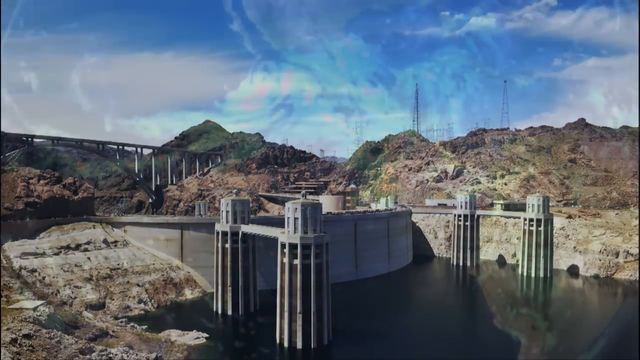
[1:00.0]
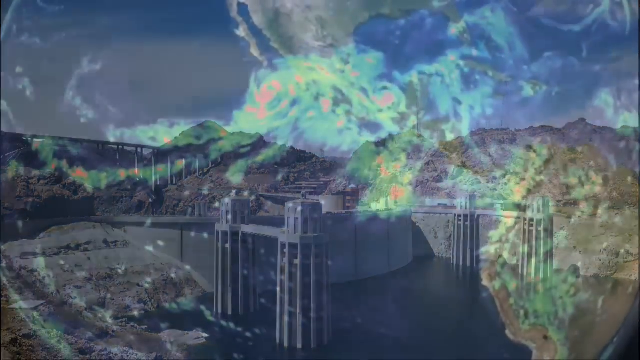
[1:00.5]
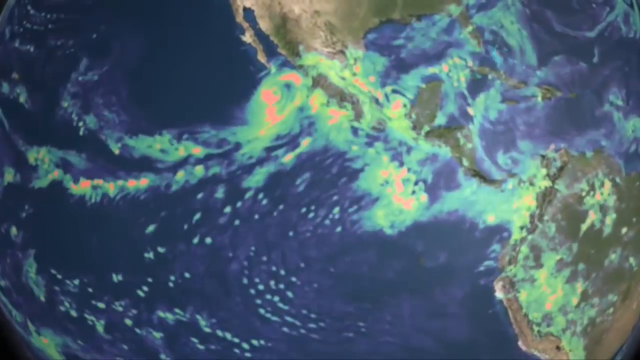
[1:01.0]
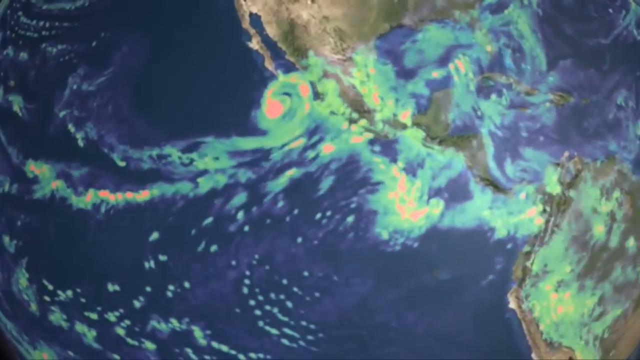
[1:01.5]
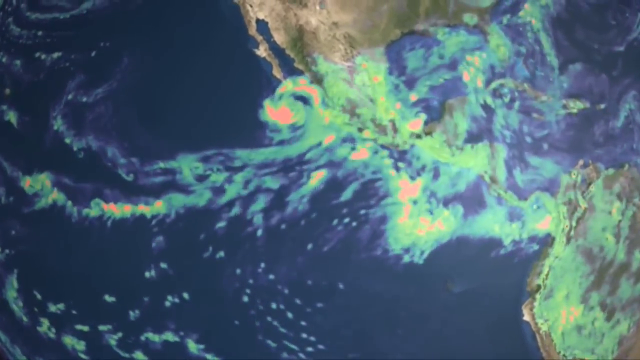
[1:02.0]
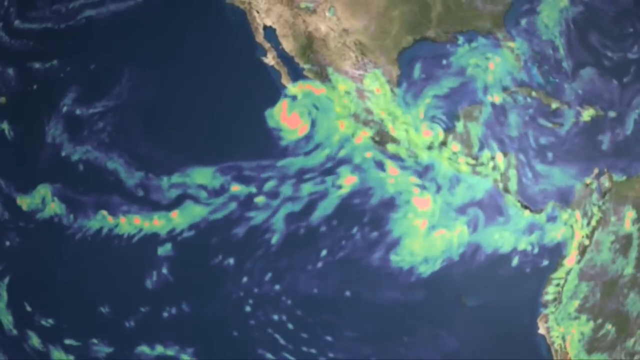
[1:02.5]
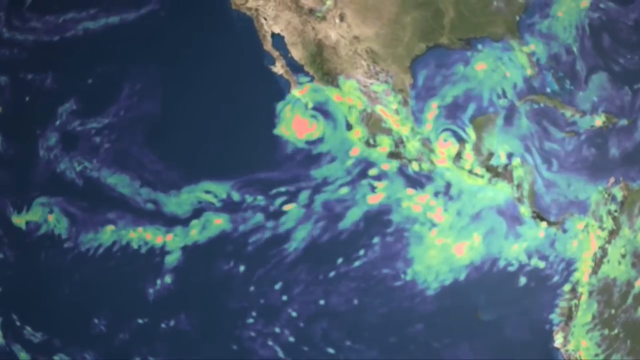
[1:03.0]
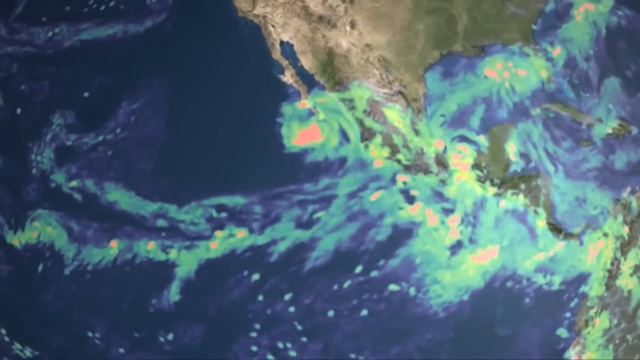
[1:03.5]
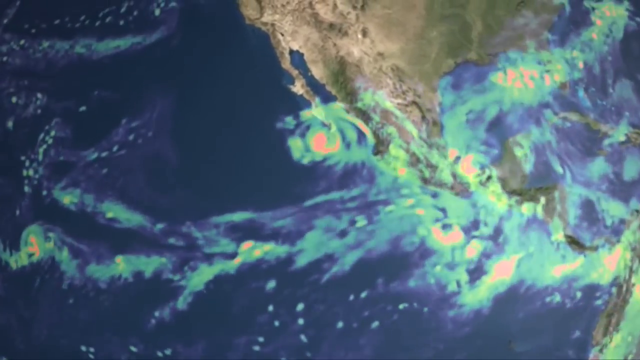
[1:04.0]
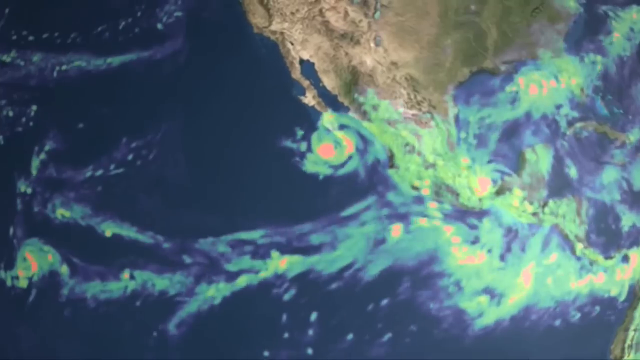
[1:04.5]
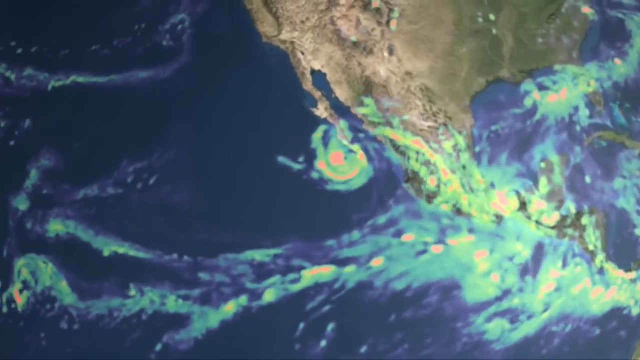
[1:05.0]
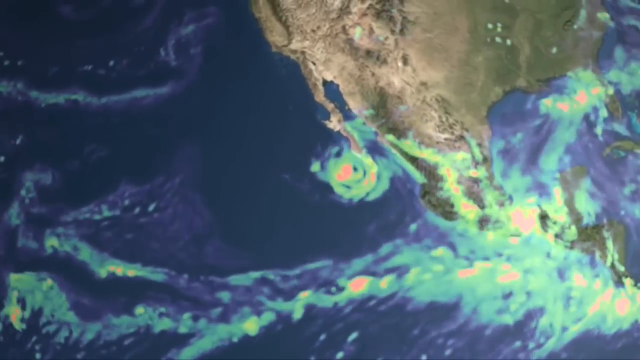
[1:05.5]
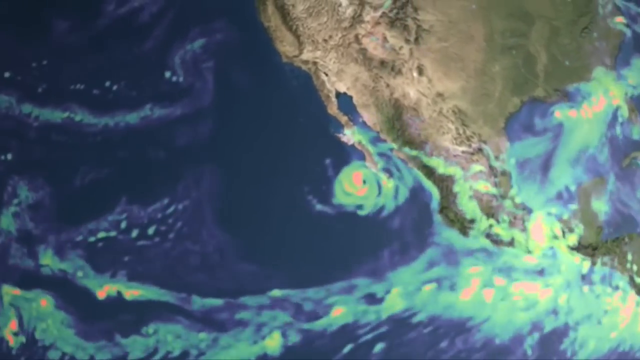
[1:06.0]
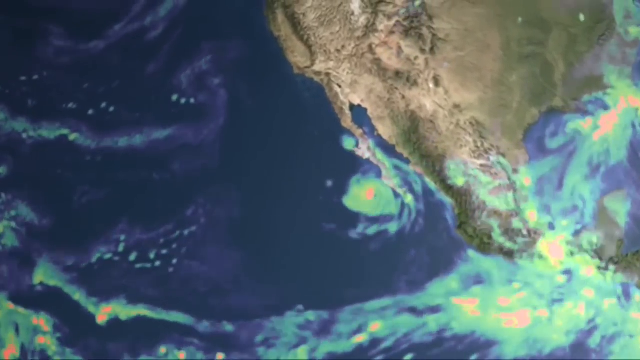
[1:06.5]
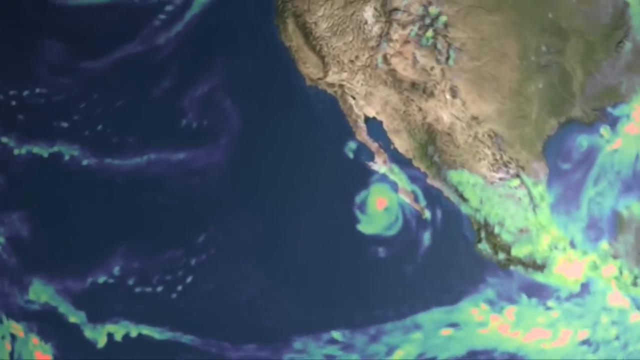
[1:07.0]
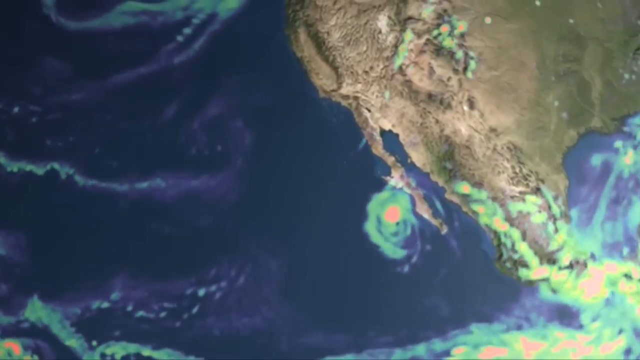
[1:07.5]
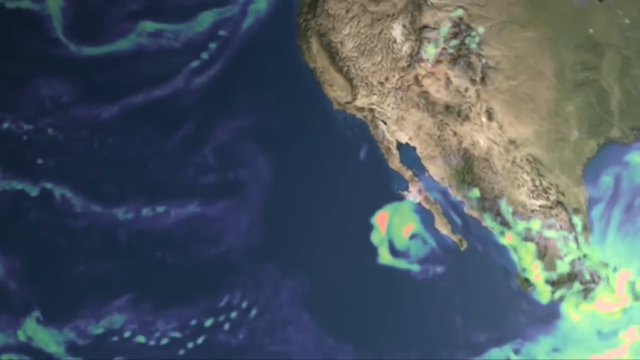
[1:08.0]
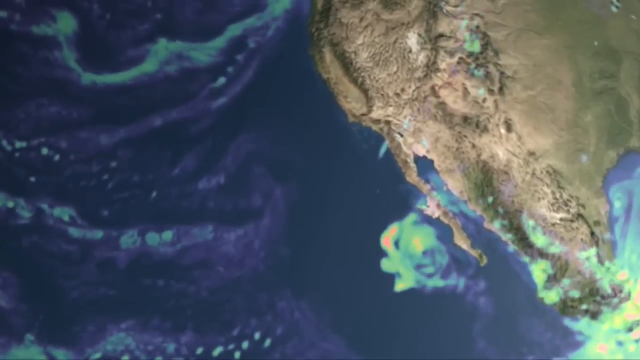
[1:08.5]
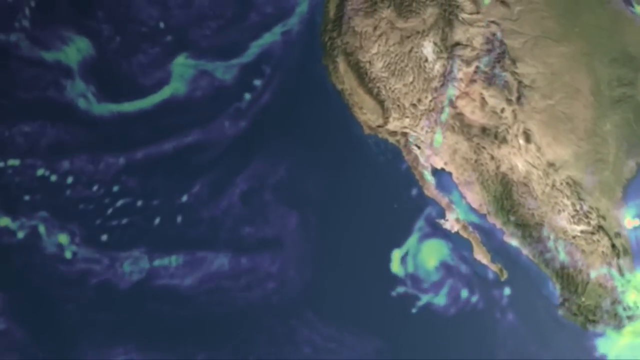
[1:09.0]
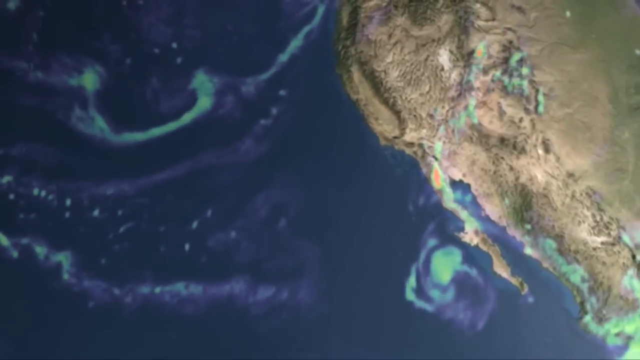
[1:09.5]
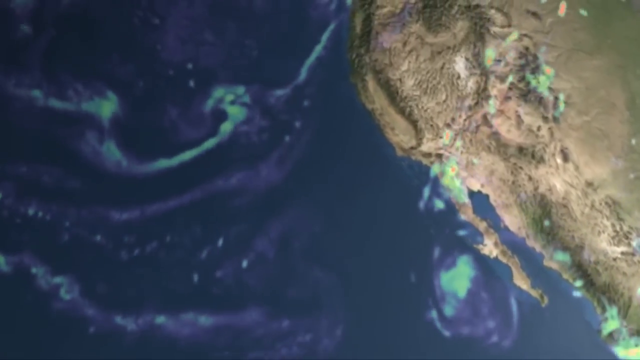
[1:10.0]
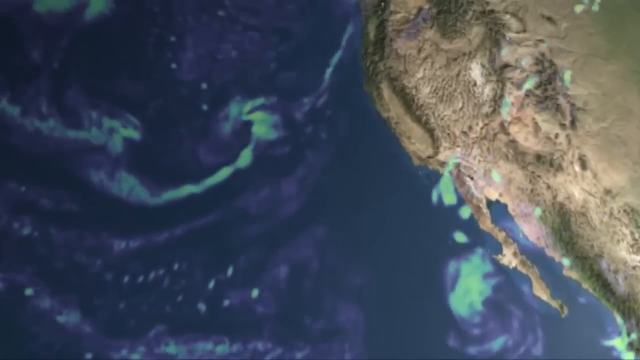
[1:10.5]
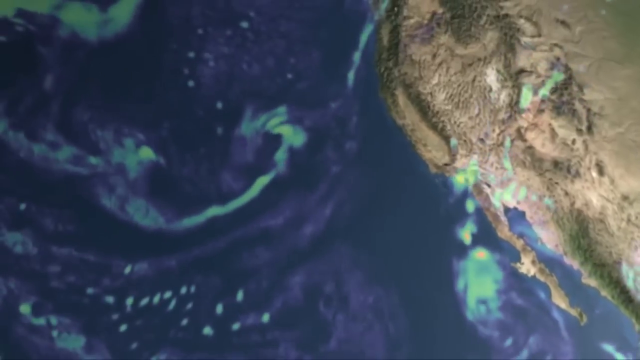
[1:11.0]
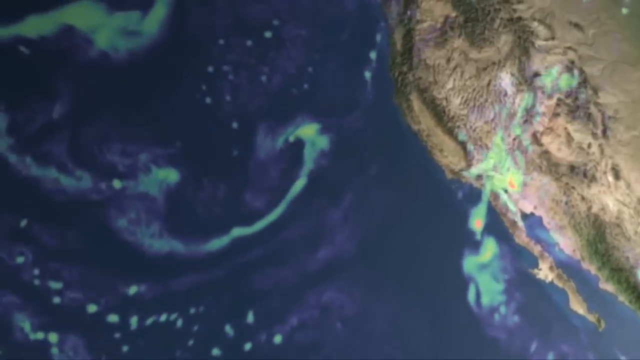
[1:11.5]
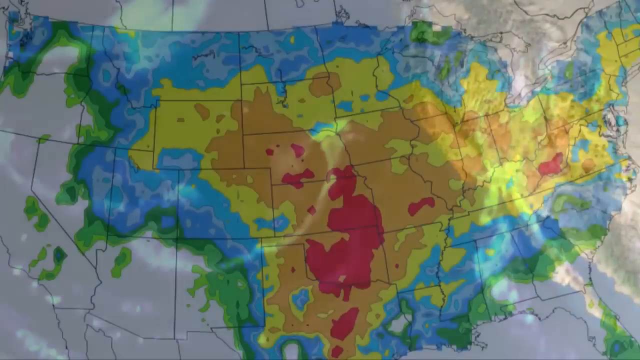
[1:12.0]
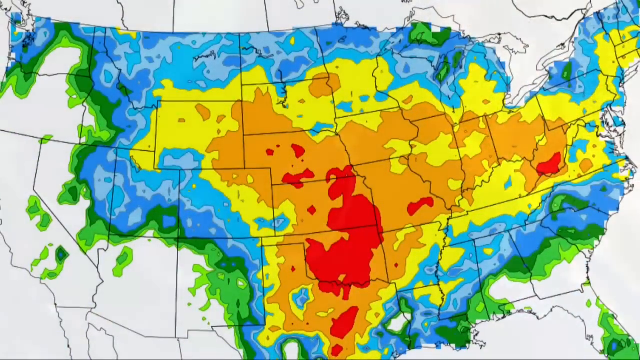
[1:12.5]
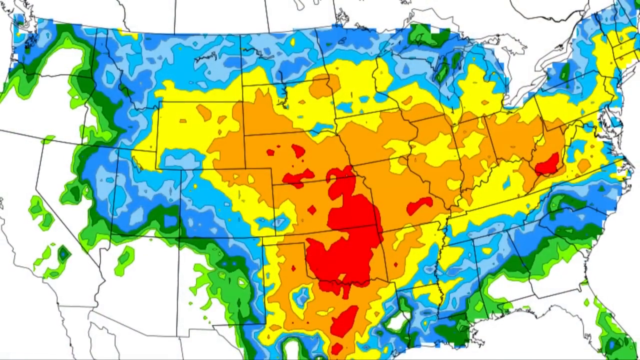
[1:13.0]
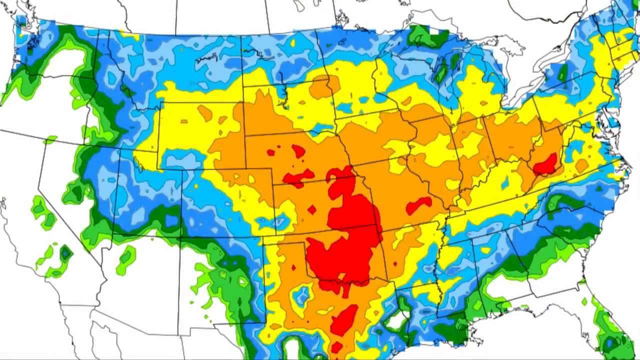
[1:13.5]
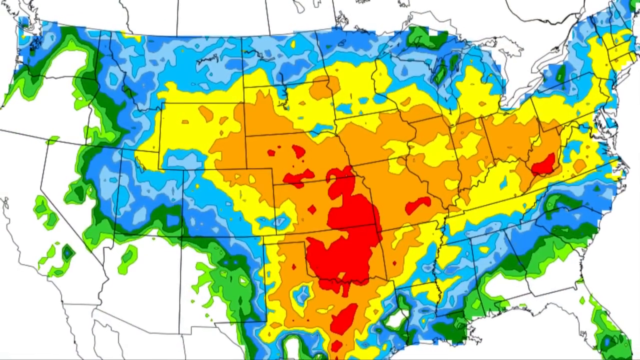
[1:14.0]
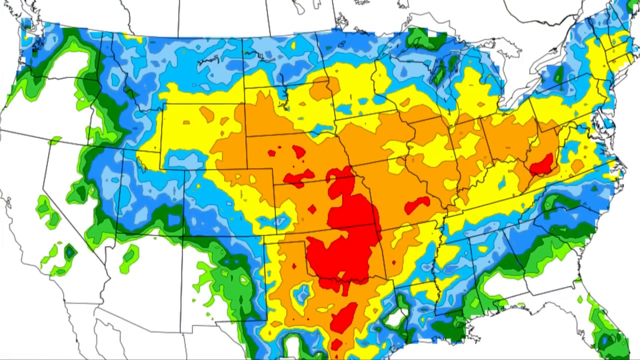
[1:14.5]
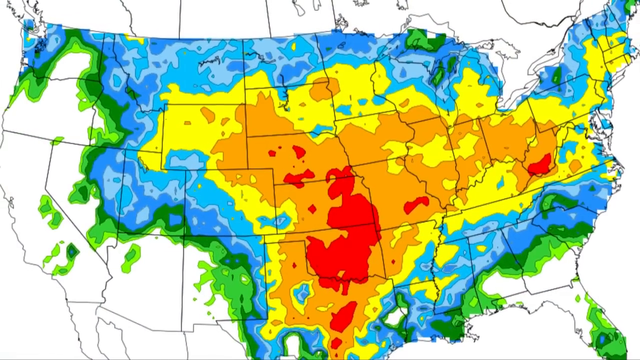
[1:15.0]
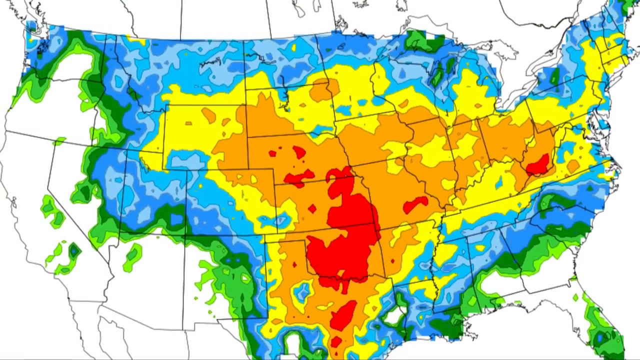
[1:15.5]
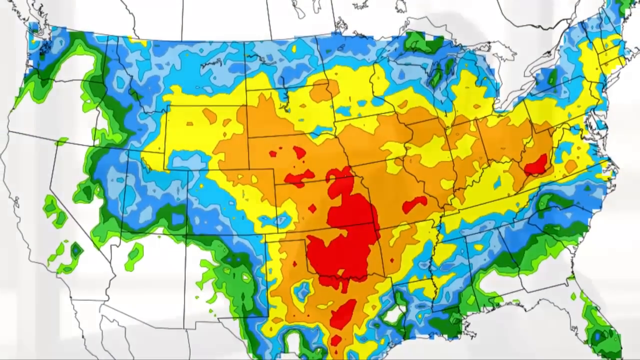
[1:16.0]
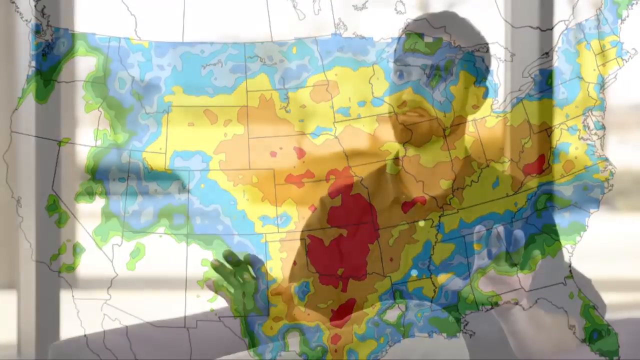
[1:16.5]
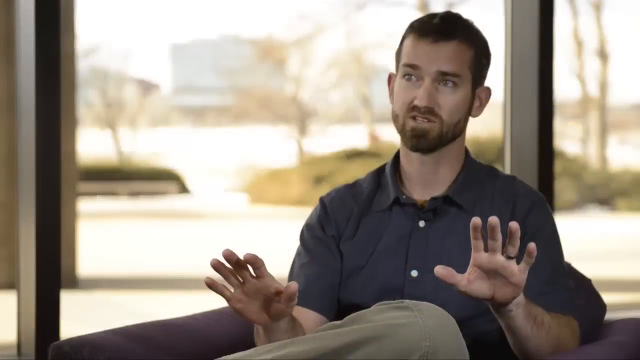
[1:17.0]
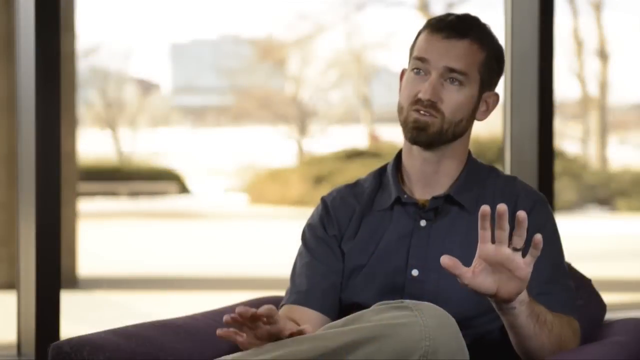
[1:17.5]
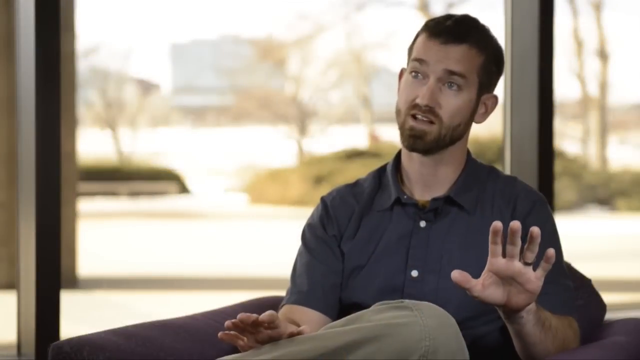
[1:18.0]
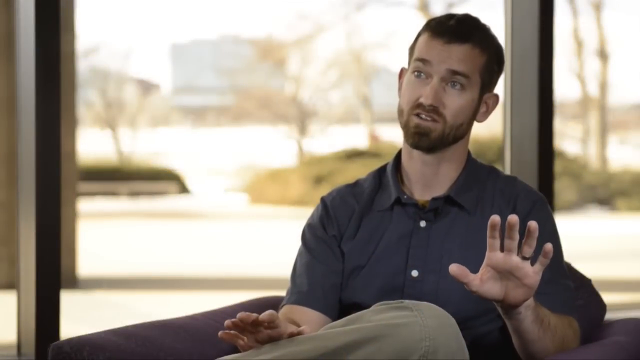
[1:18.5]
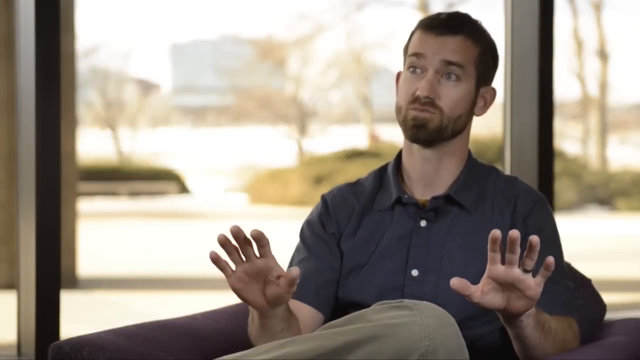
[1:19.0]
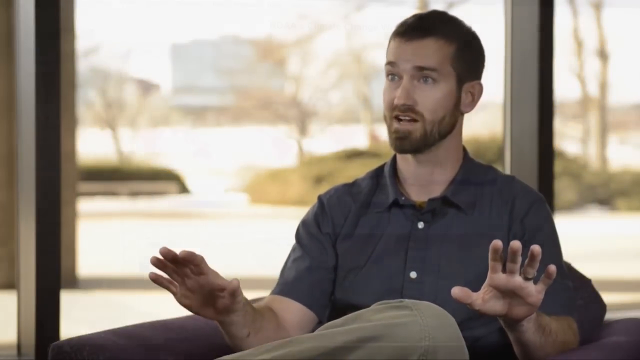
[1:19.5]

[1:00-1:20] A large dam of grey concrete has been built across a river. Four large columns stand up out of the water, joined together with walkways. It spans the whole of the river, and cars go across on top of the dam. A graphic then shows some landmasses and the ocean, with swirling fluorescent green patterns made by the wind forming a circle next to the landmass, which could be a tornado or a hurricane. Next comes a graphic of North America, mainly green all around the edge, with blue in the next layer, bright yellow internally, and a red area at the very centre of the map; the outlines of all the different states of America are visible. A man then talks to the camera, gesticulating with his hands and nodding his head slightly. He wears a dark blue shirt with white buttons and has a dark beard, moustache and dark hair.